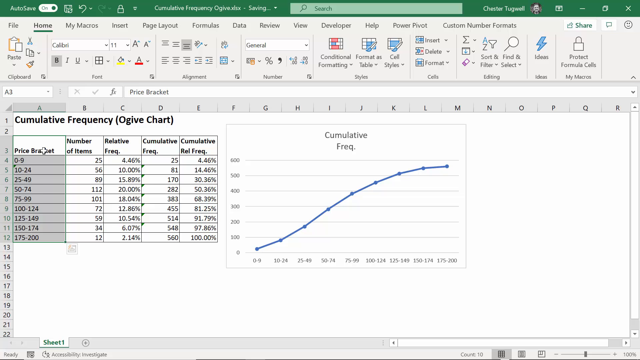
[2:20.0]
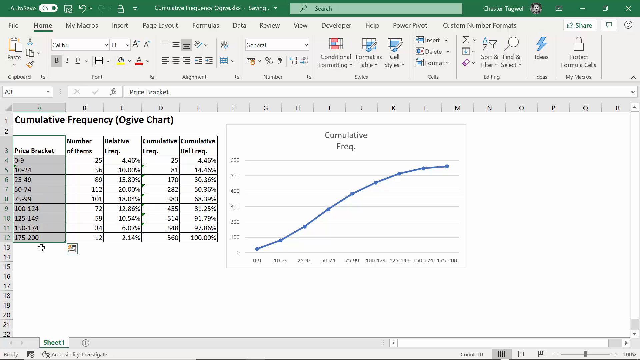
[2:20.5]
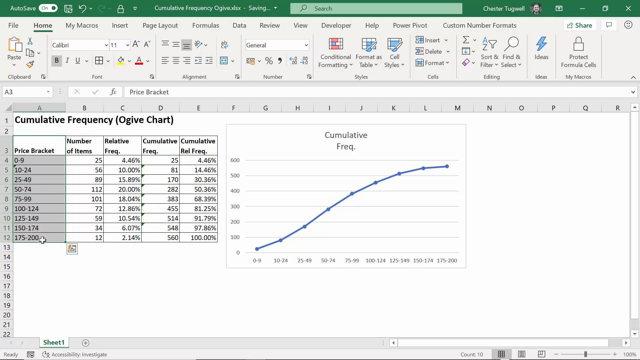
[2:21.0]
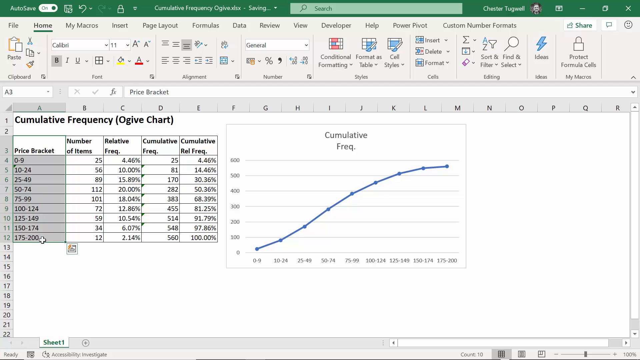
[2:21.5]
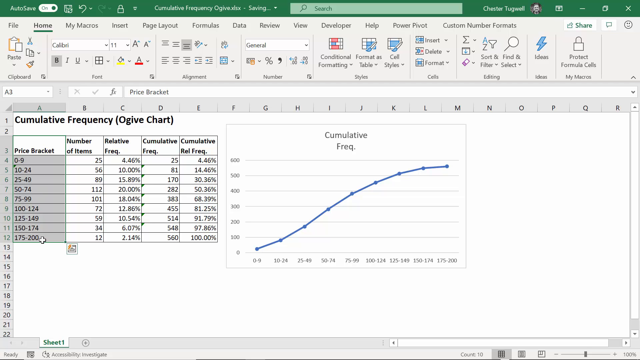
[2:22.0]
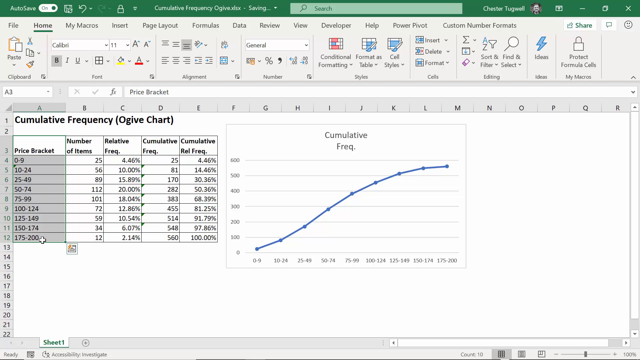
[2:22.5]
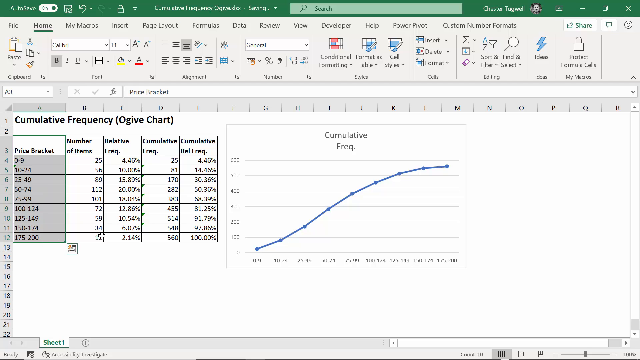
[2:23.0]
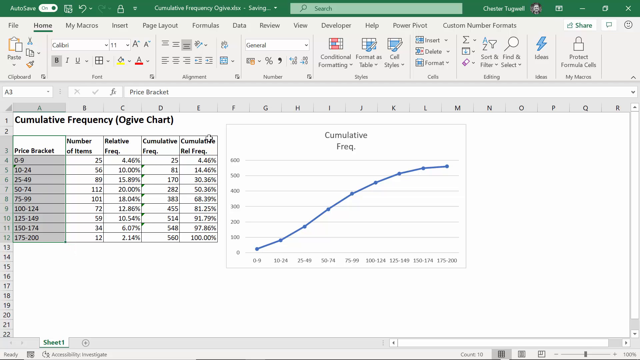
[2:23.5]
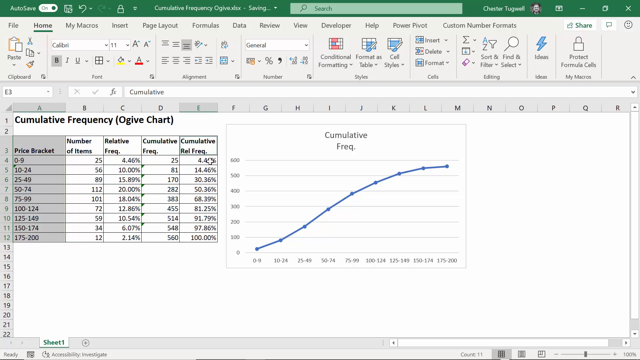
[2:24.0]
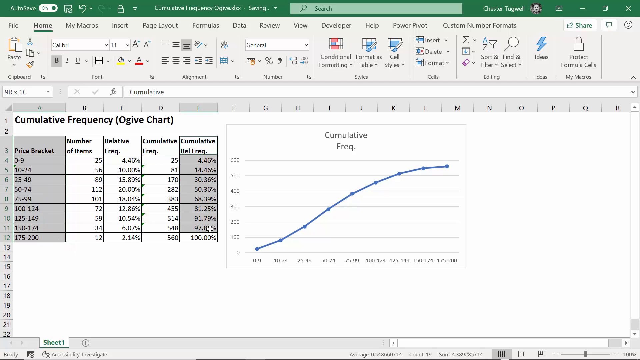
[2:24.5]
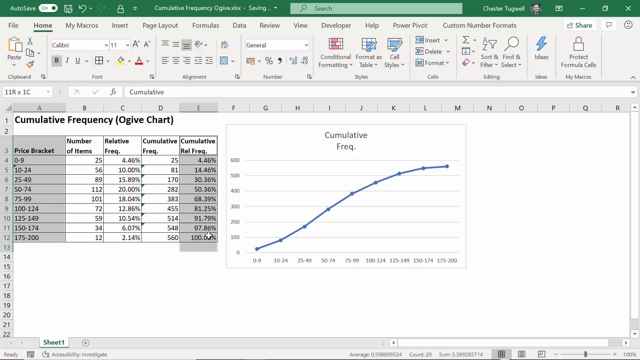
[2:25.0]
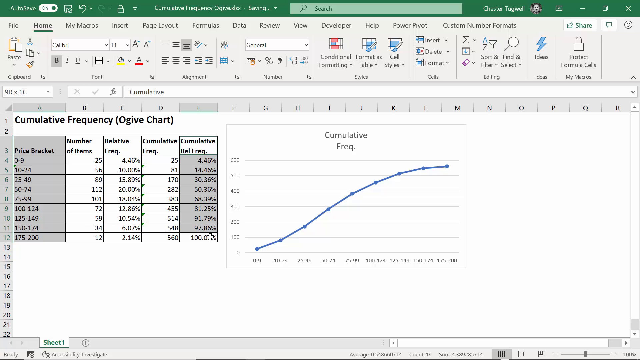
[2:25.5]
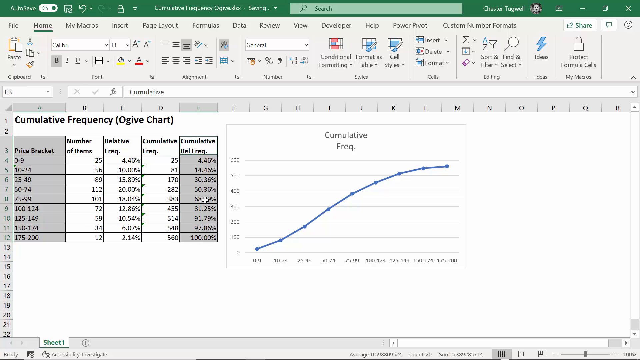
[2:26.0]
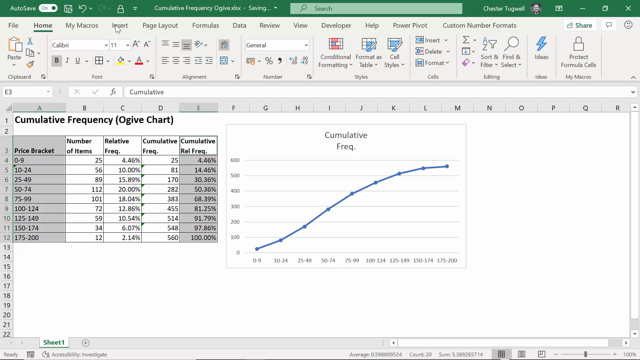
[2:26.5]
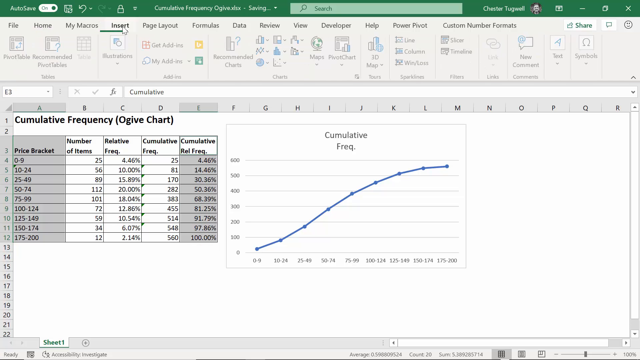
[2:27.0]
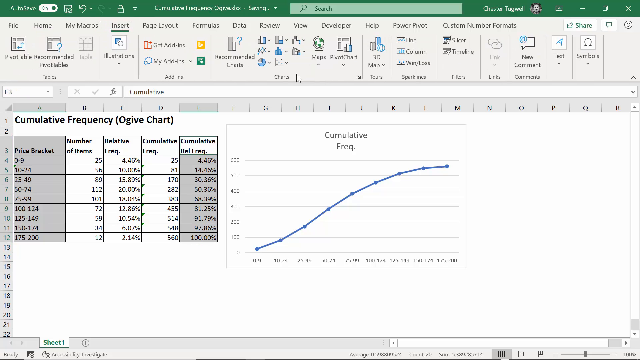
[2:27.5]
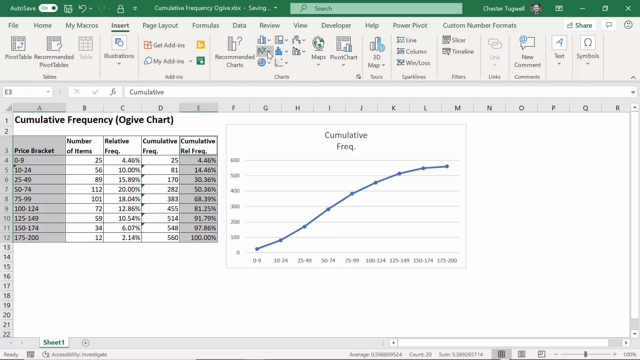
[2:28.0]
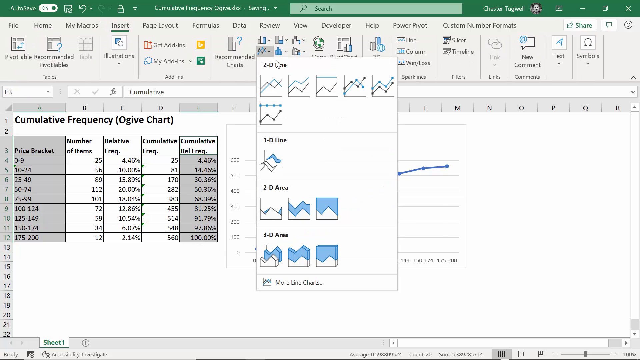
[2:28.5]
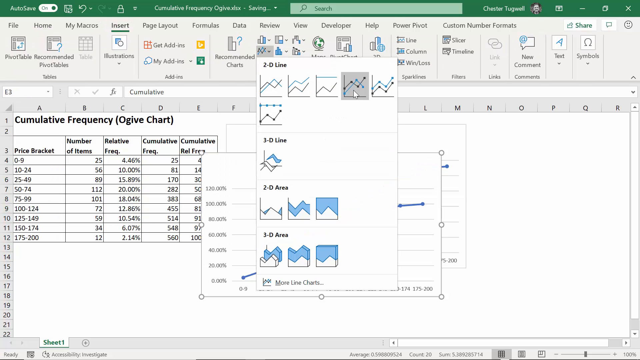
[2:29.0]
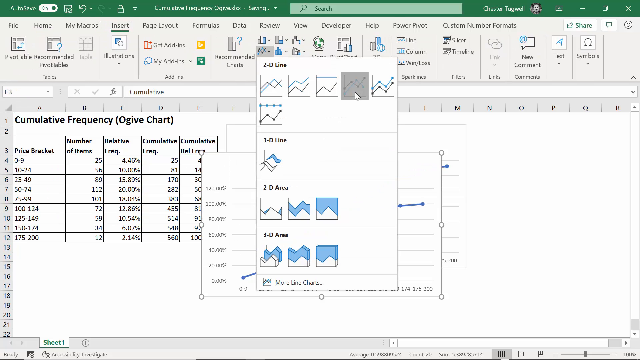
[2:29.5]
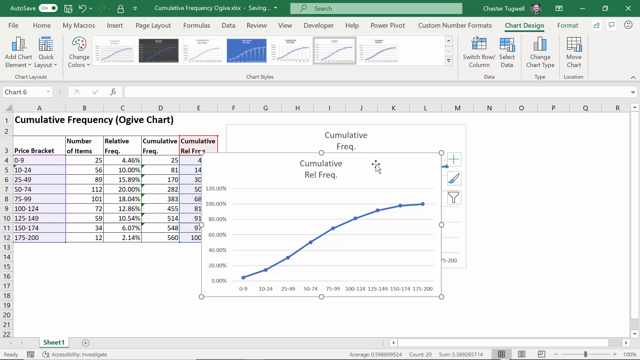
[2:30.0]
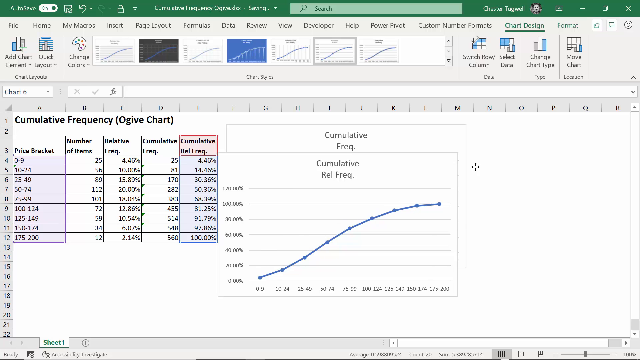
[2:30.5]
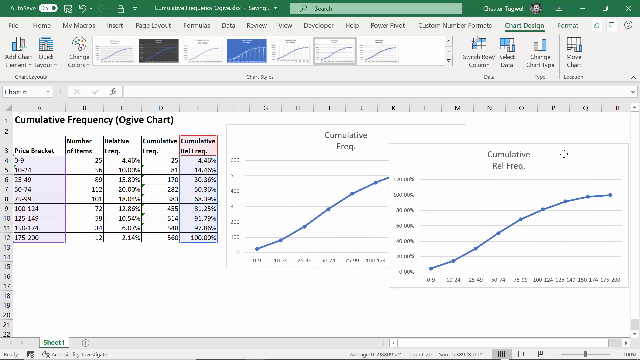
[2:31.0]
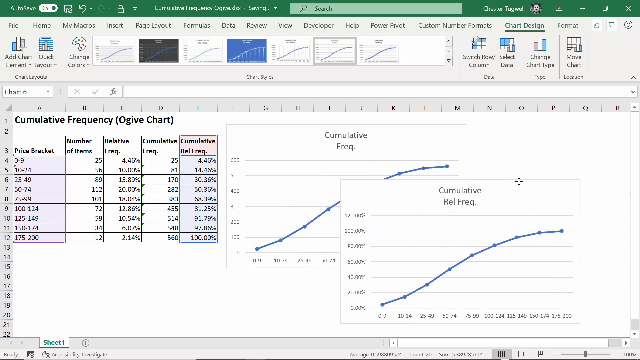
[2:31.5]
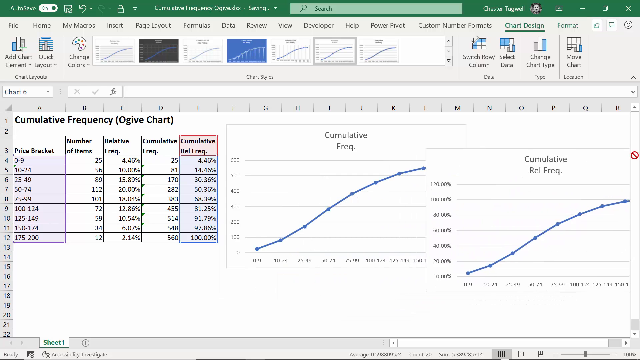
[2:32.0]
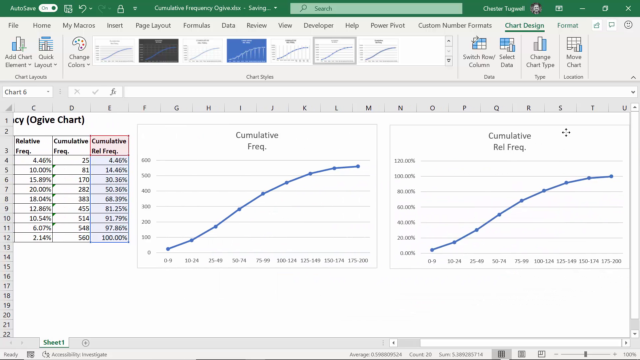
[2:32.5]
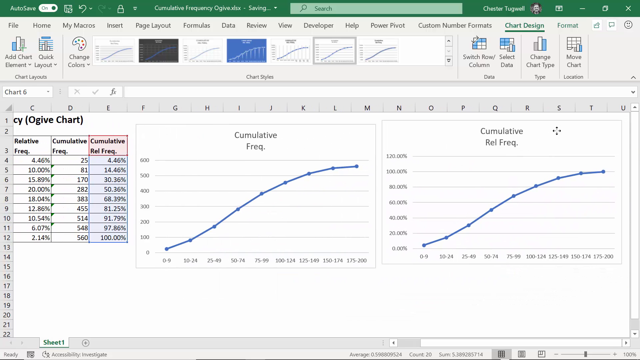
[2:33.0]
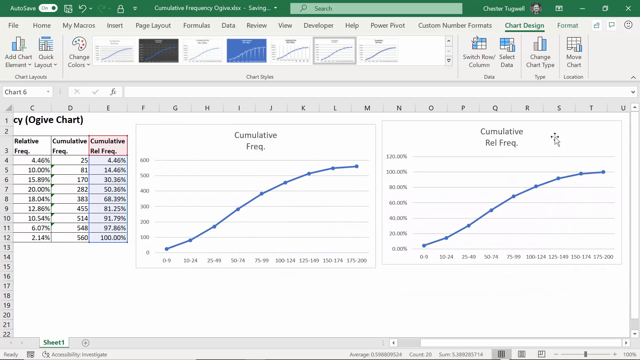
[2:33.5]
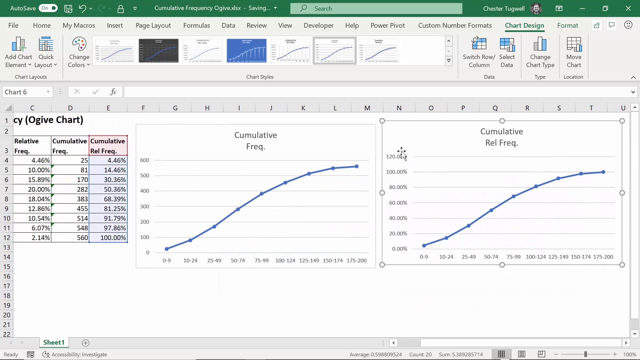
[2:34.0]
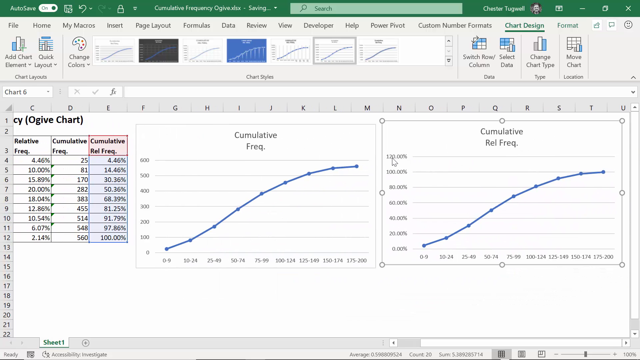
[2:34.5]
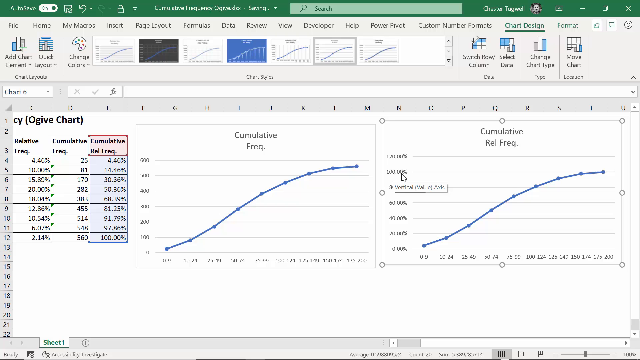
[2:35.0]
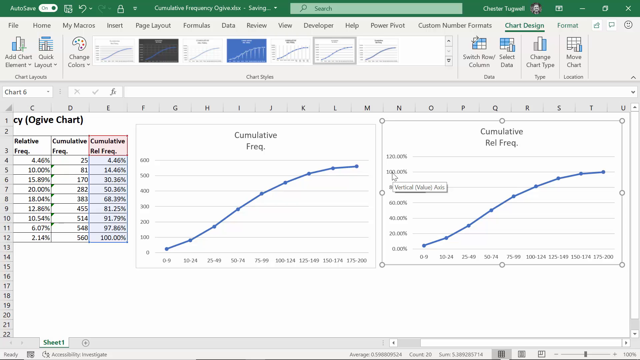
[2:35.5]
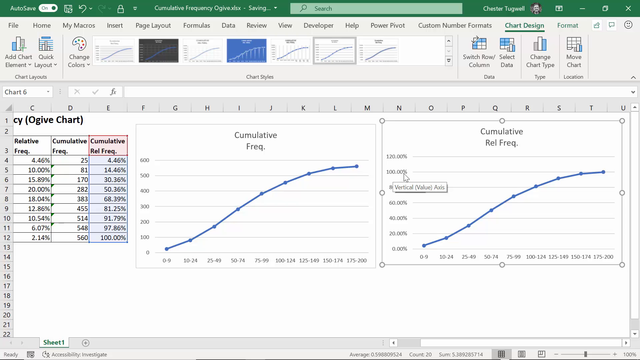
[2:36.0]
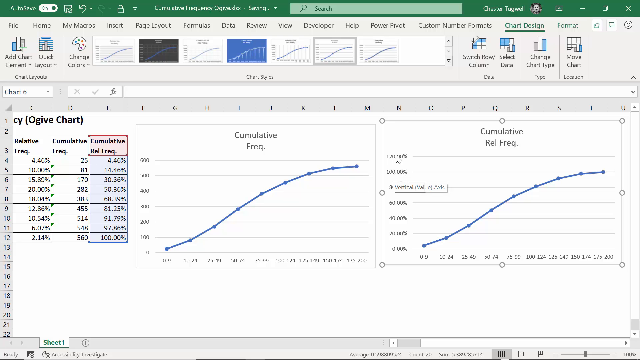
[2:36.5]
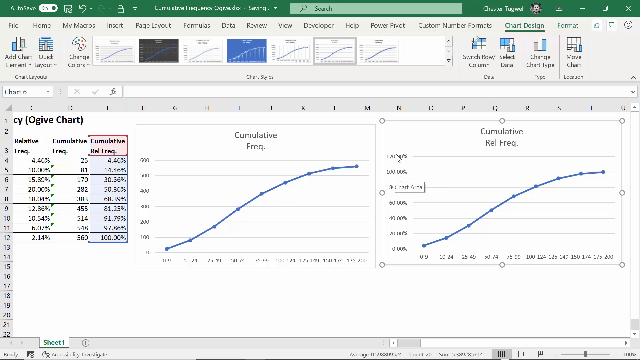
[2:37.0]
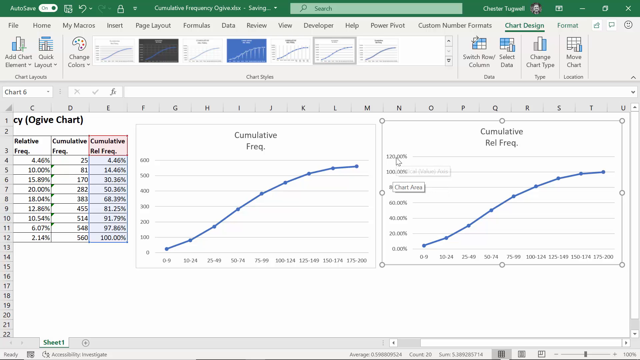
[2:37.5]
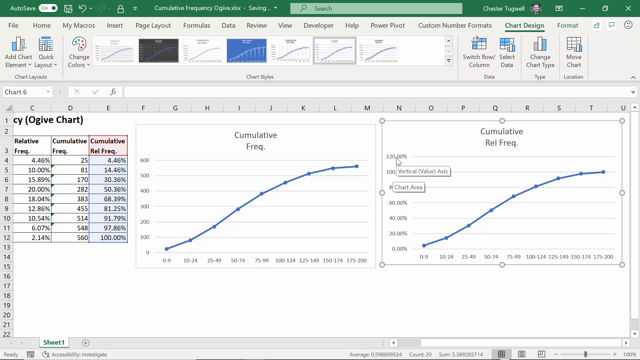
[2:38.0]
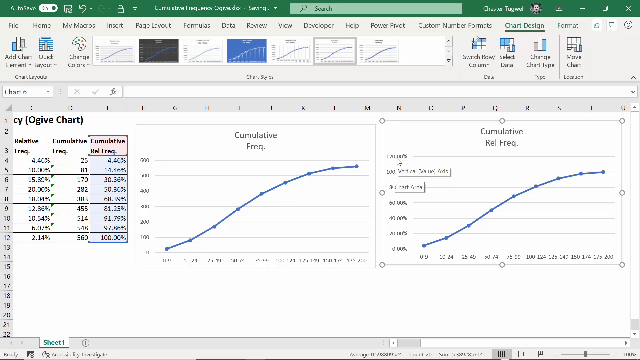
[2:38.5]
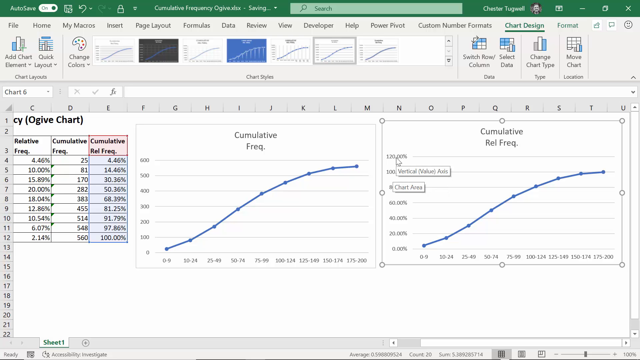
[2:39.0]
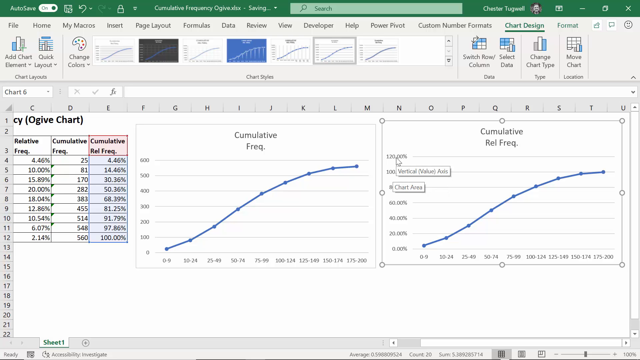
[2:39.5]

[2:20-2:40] The person selects the price bracket section and the cumulative rel frequency section, then creates another chart in the same format as the cumulative frequency chart, this one specifically for the cumulative REL frequency column. The chart represents the numbers and percentages in the cumulative REL frequency boxes. The two charts are now next to each other, both based on the table.